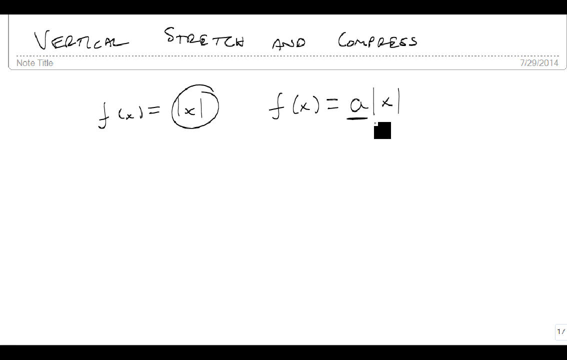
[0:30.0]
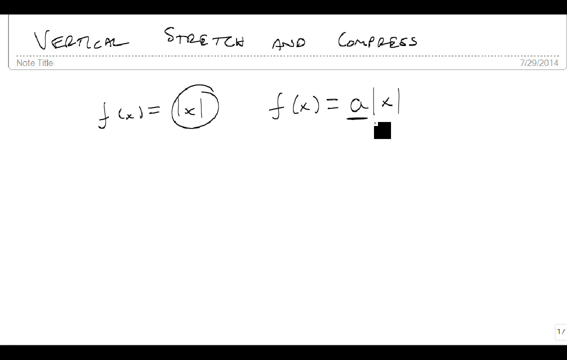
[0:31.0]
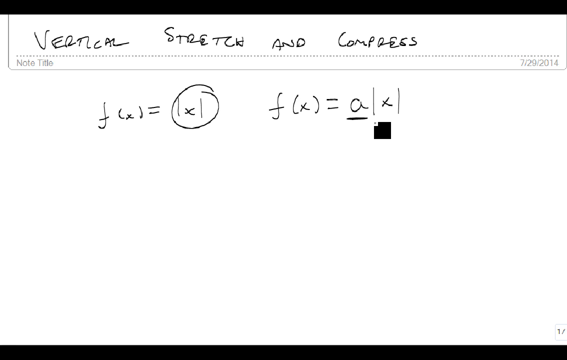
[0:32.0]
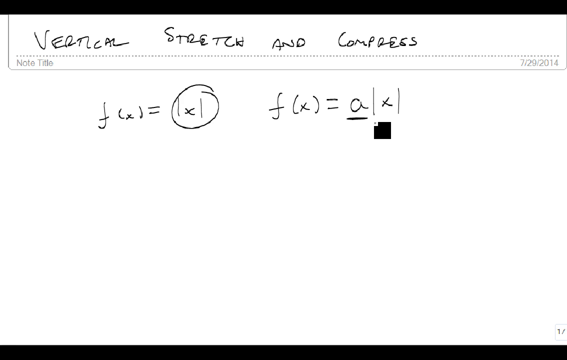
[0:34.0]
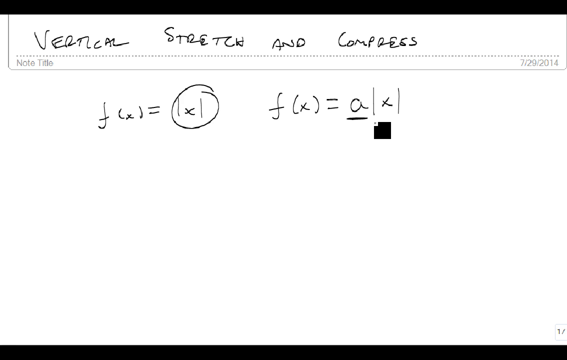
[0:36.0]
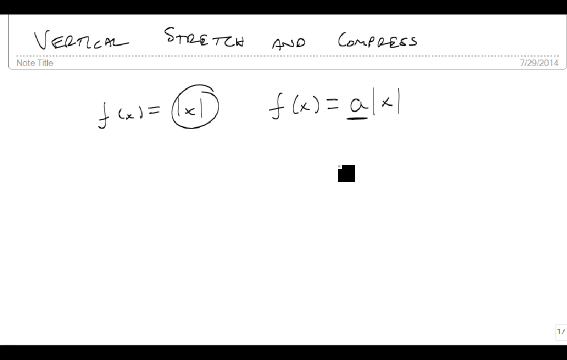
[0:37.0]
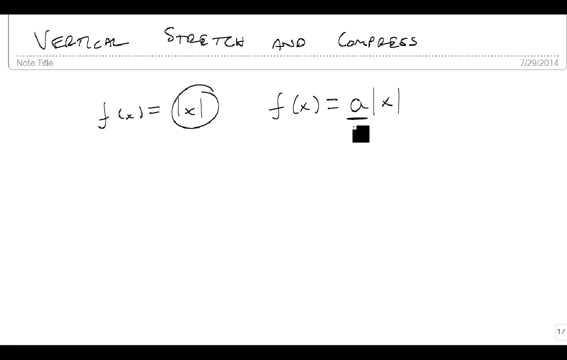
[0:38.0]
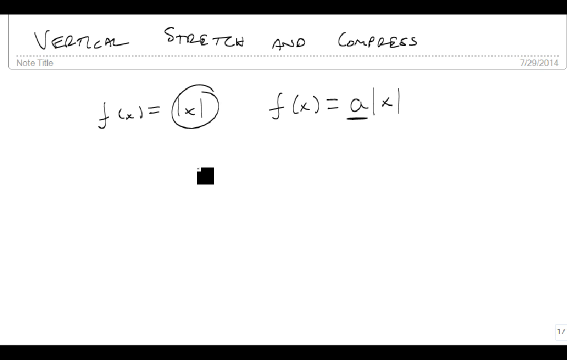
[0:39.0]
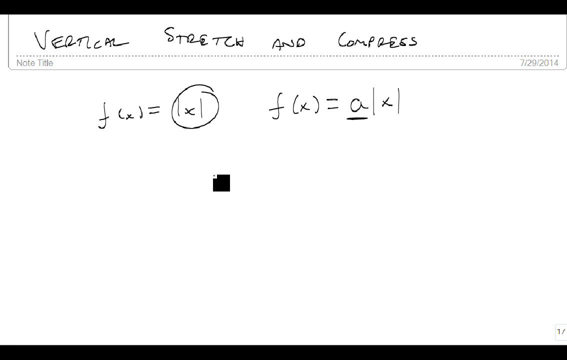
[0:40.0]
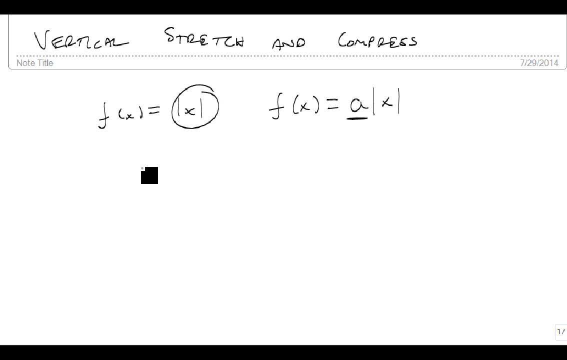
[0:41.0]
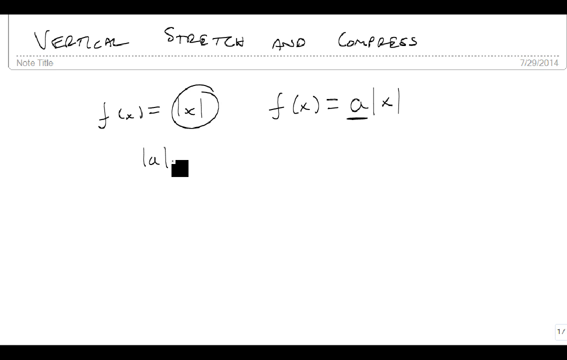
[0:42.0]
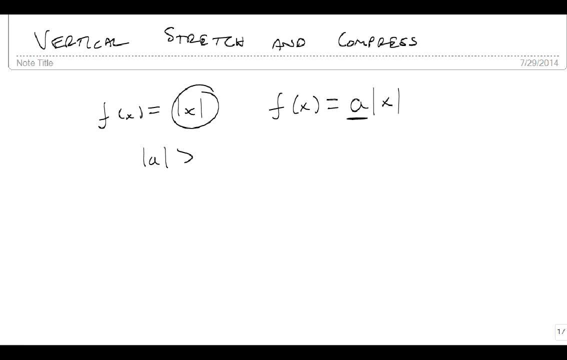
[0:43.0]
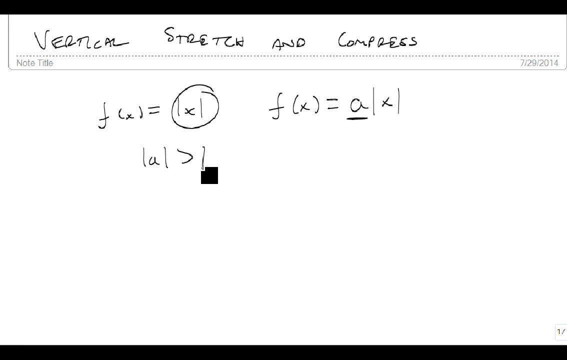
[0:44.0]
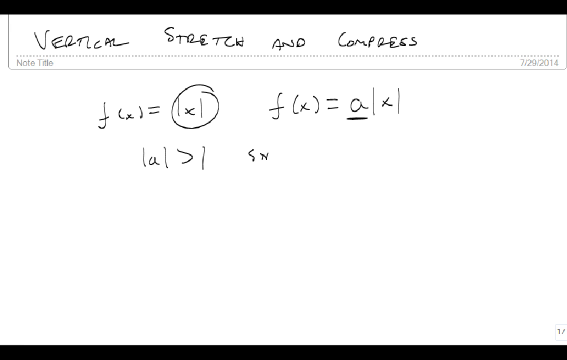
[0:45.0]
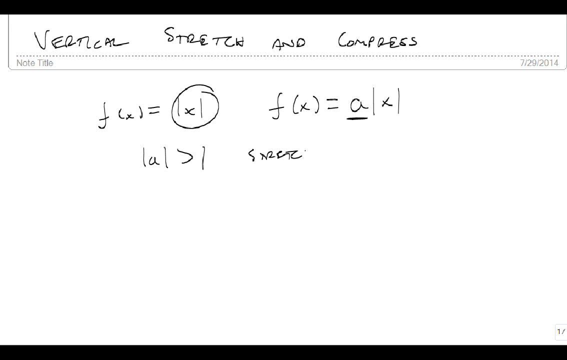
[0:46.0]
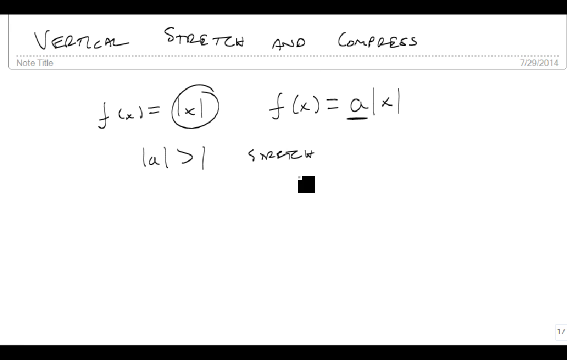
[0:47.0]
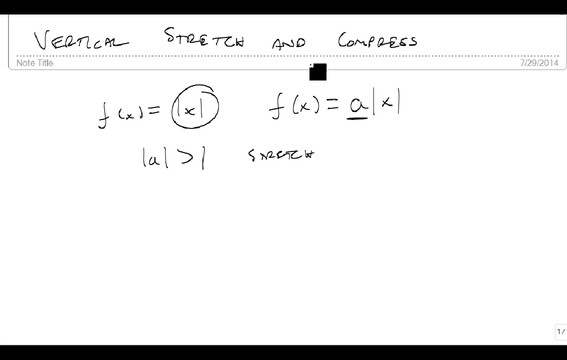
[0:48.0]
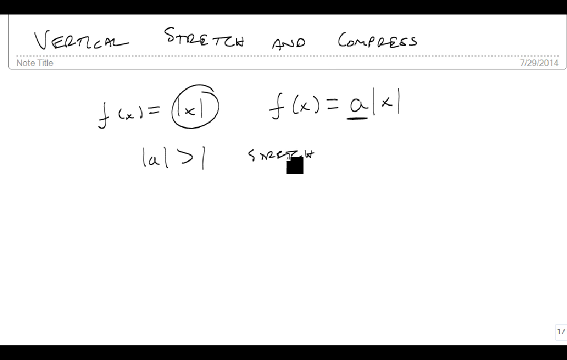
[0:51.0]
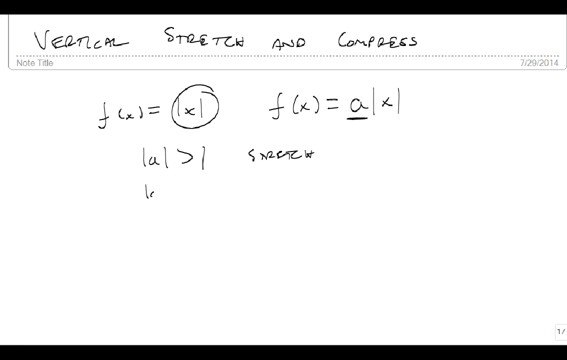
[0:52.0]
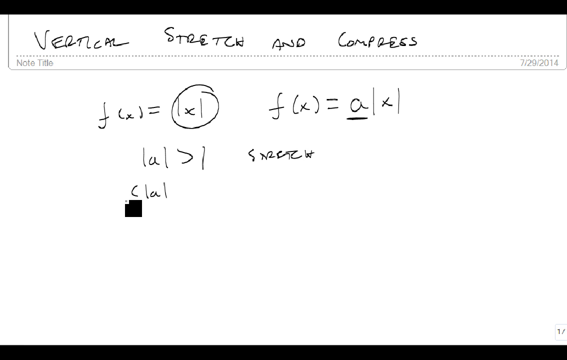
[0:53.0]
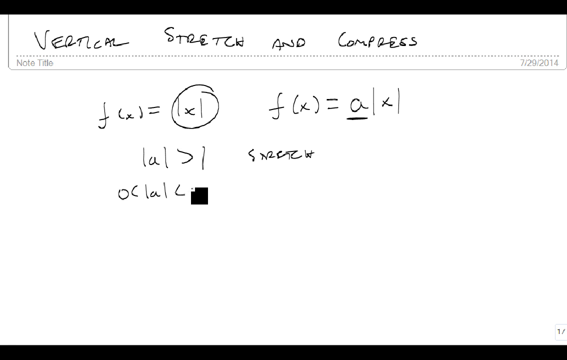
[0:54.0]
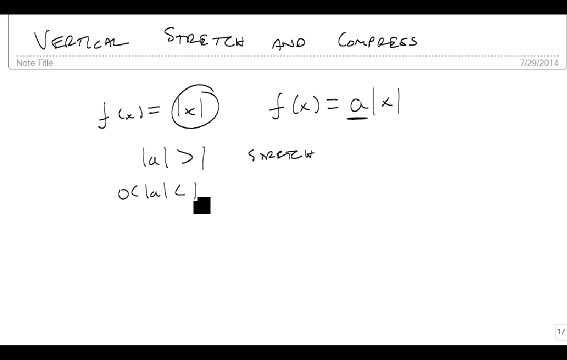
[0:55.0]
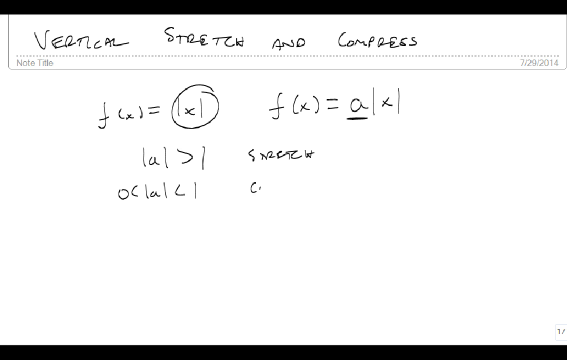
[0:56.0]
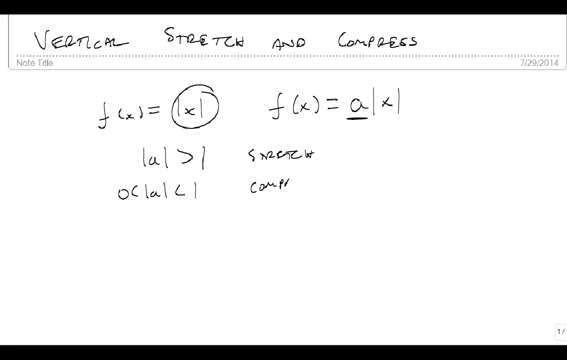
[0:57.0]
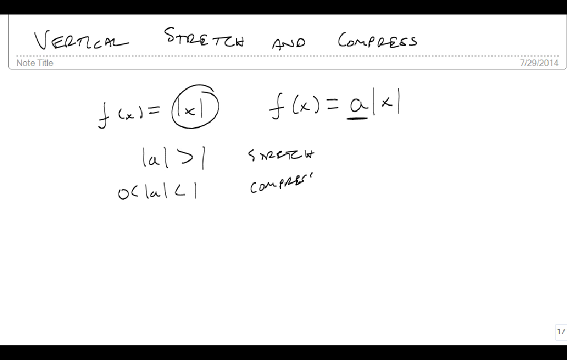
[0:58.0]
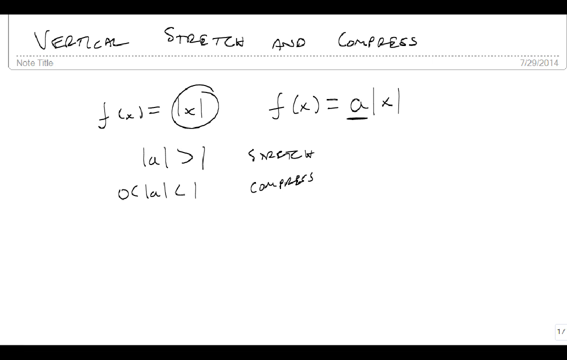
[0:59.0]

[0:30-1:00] The "vertical stretch and compress" text remains on the white background as more formulas are written on the screen, including a statement that the absolute value is greater than 1, with "a2" underlined in the function. More black text is added, associating each part of the equation with the stretch and compress formulas. No human or animal subjects appear, and the screen stays the same.